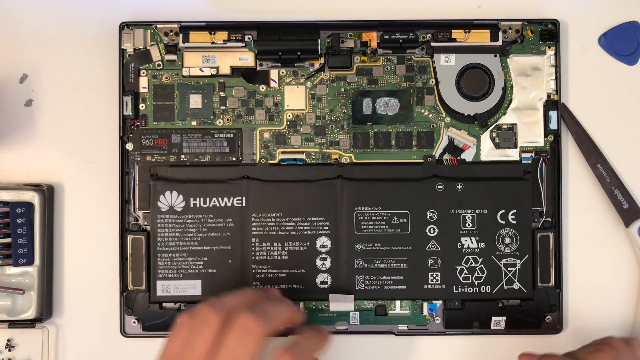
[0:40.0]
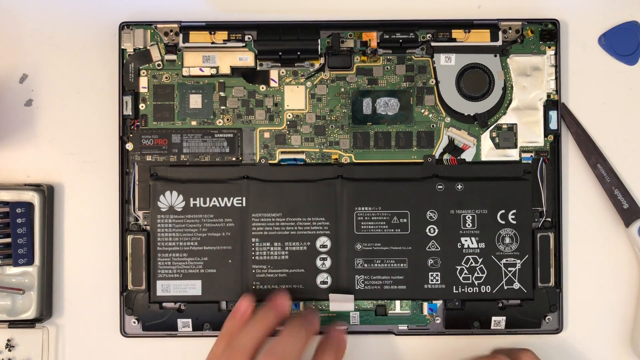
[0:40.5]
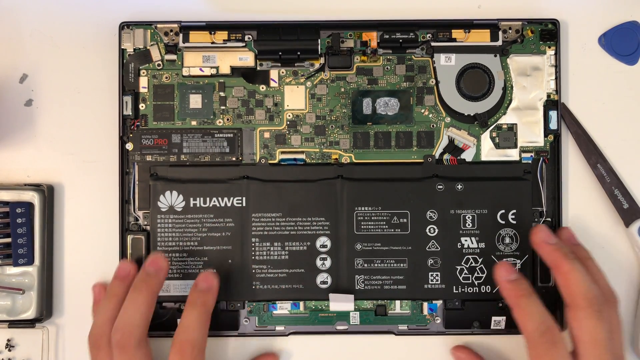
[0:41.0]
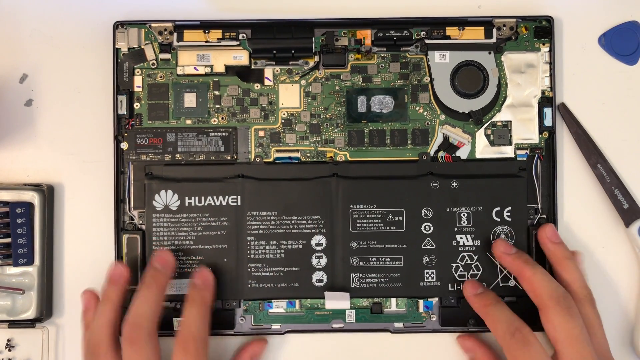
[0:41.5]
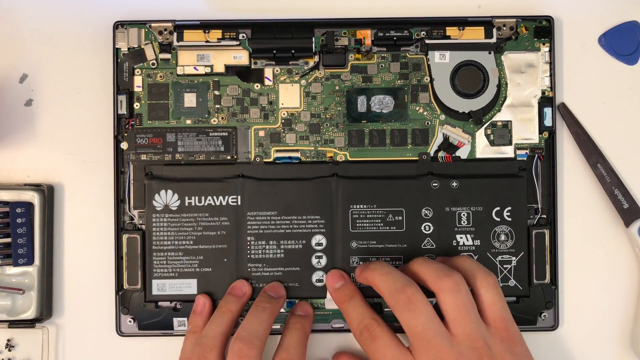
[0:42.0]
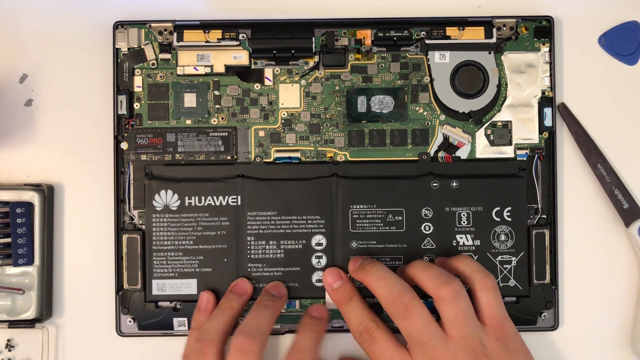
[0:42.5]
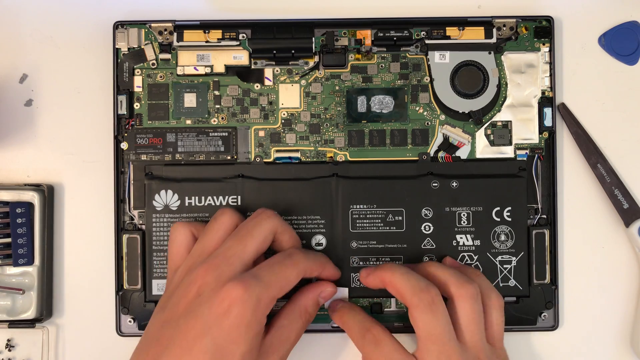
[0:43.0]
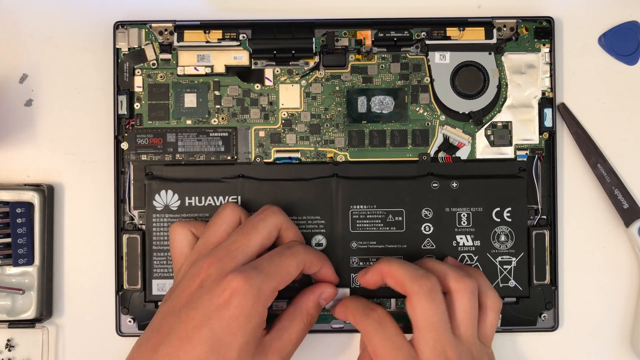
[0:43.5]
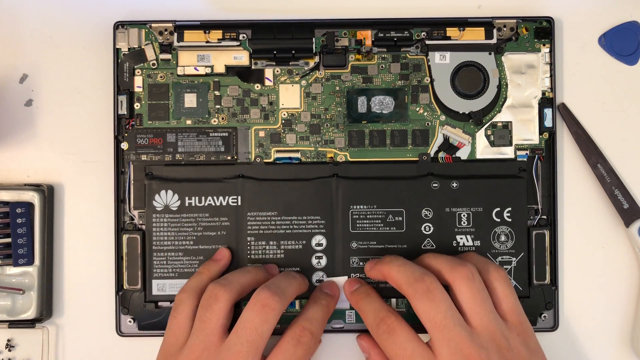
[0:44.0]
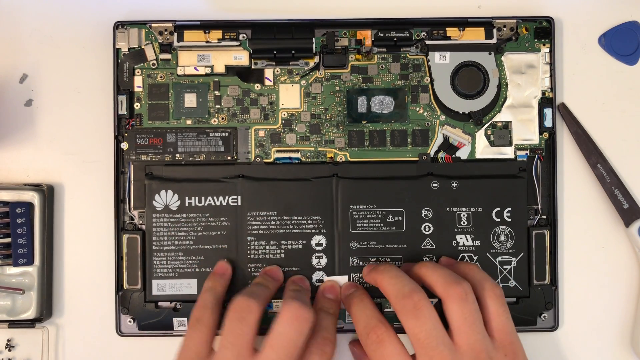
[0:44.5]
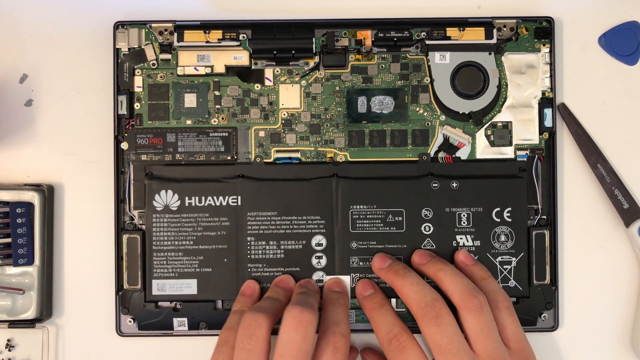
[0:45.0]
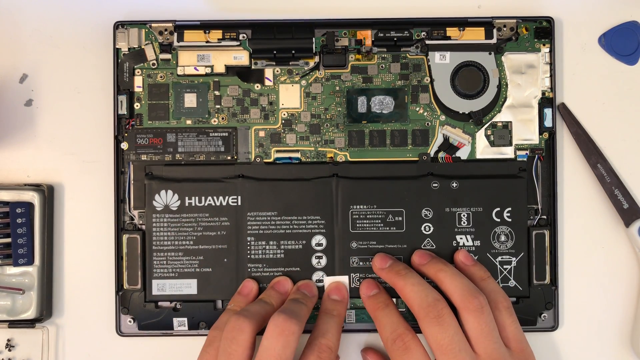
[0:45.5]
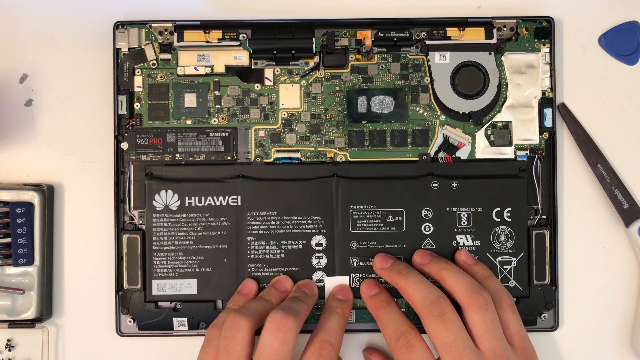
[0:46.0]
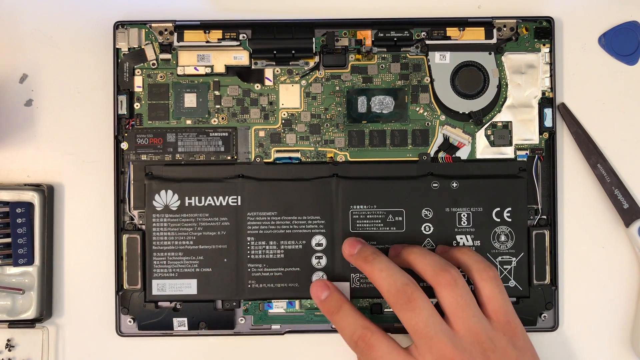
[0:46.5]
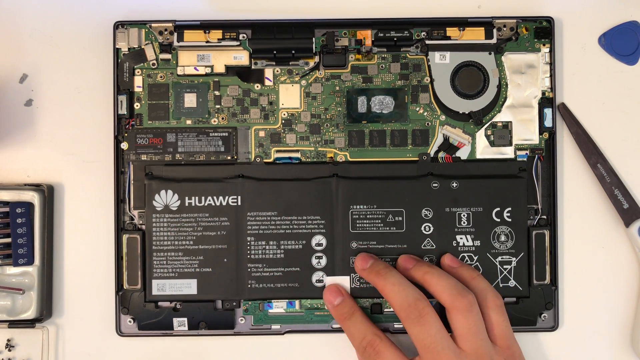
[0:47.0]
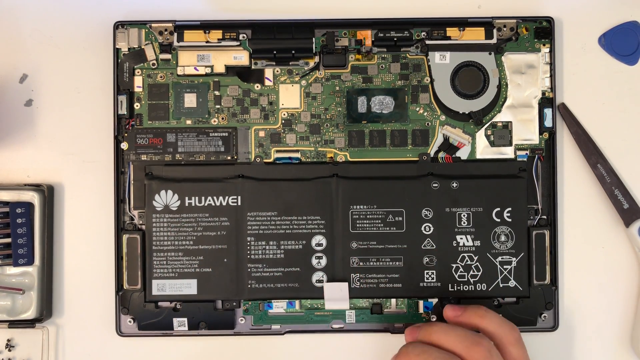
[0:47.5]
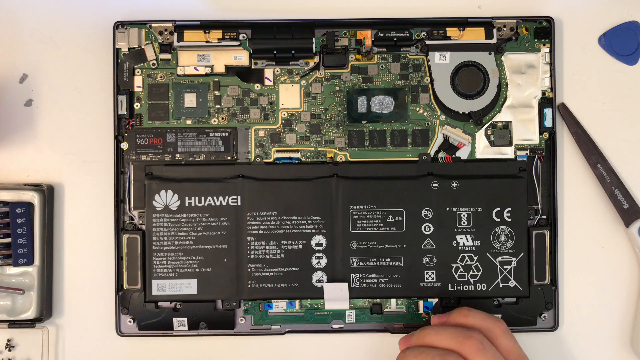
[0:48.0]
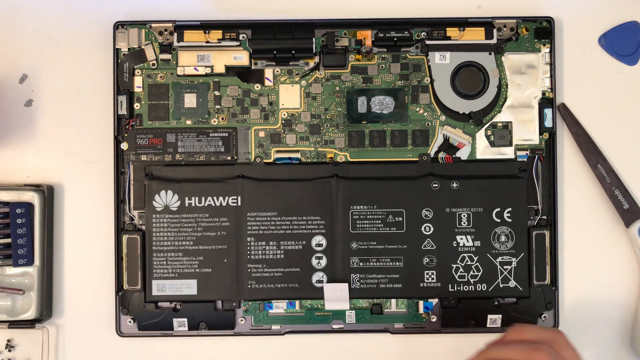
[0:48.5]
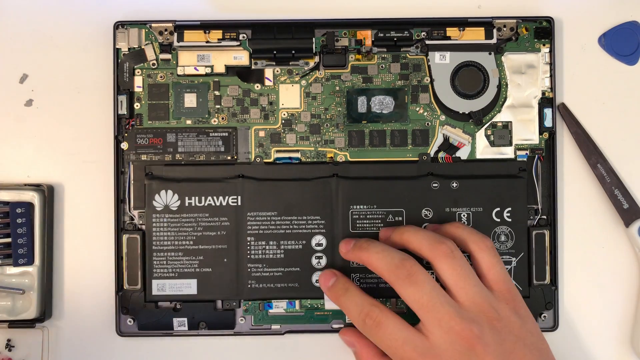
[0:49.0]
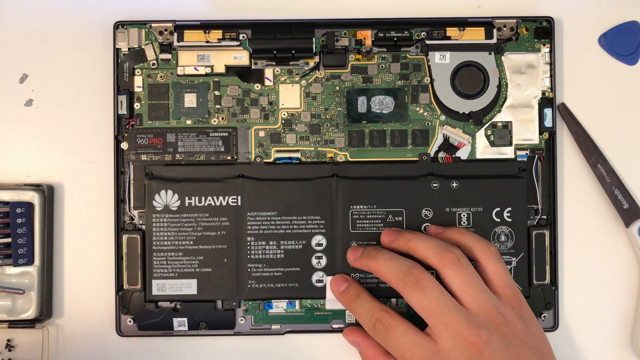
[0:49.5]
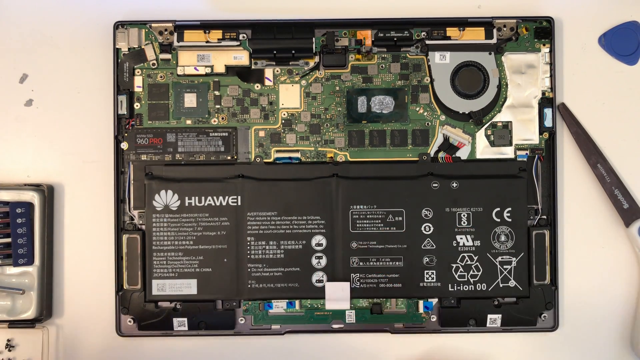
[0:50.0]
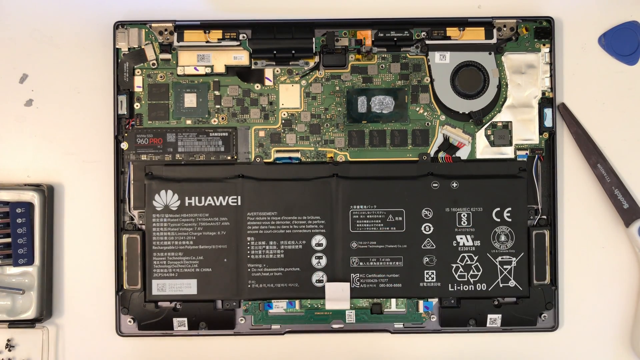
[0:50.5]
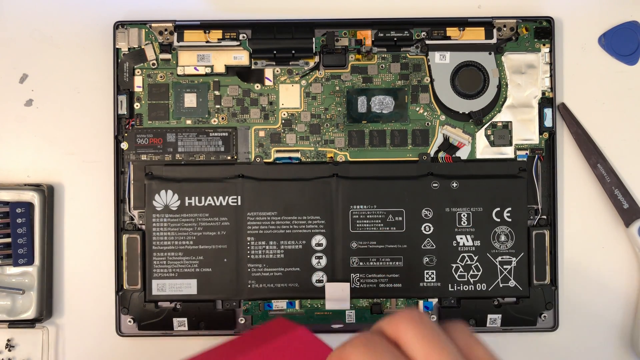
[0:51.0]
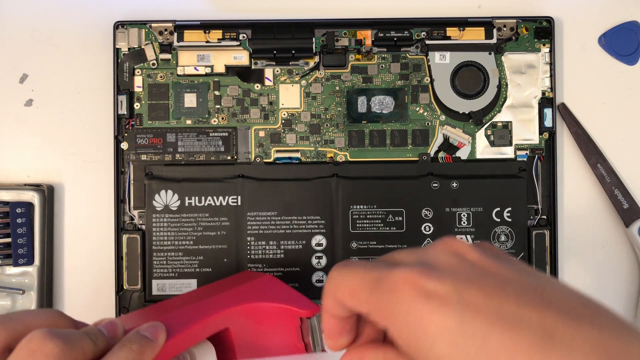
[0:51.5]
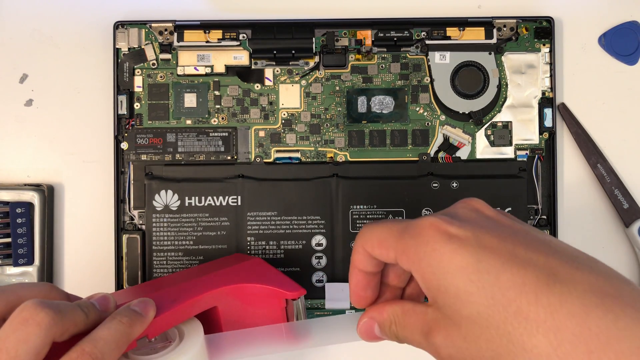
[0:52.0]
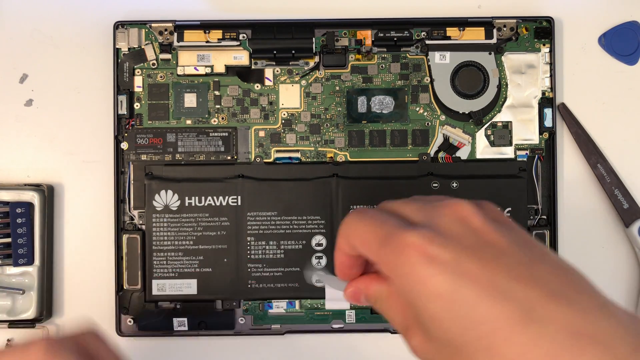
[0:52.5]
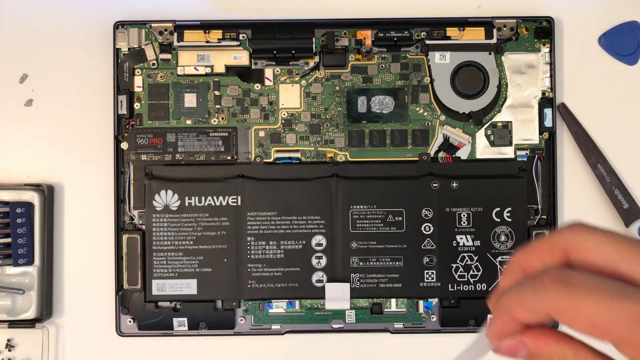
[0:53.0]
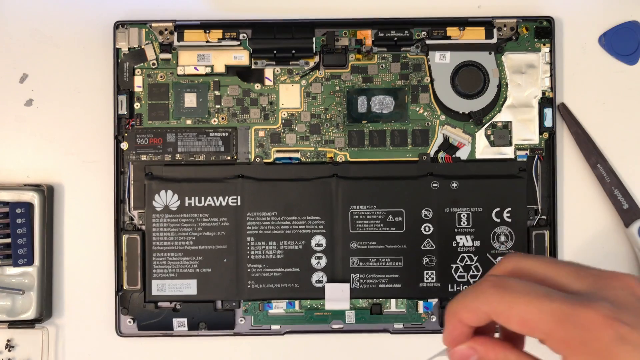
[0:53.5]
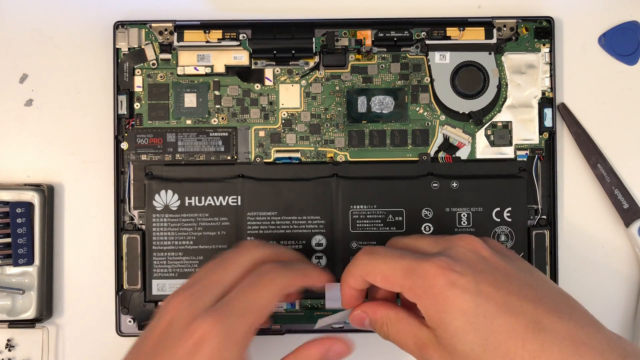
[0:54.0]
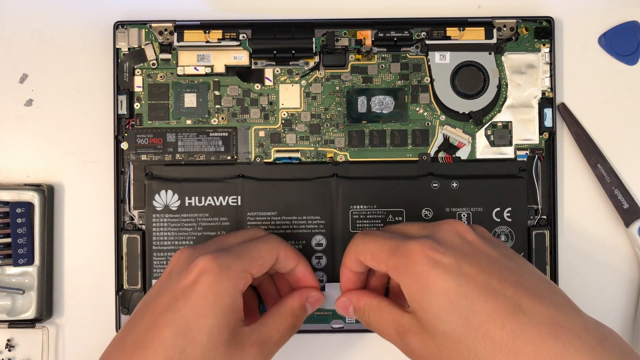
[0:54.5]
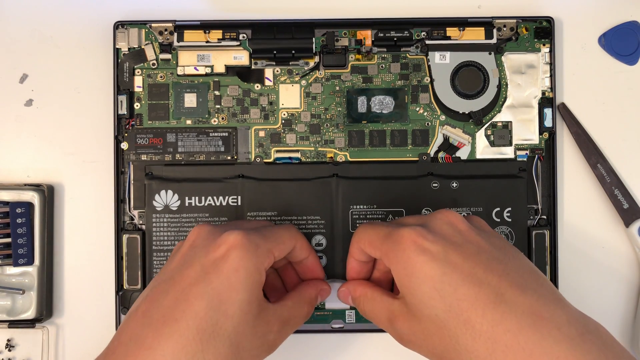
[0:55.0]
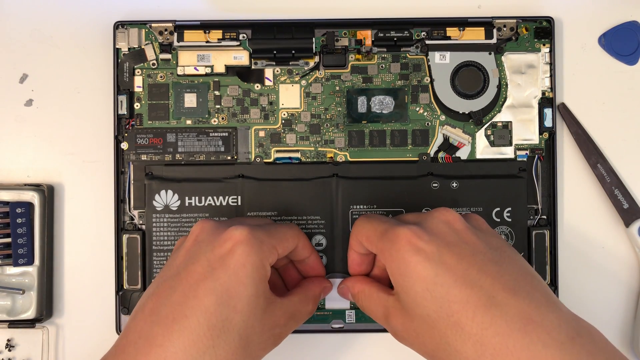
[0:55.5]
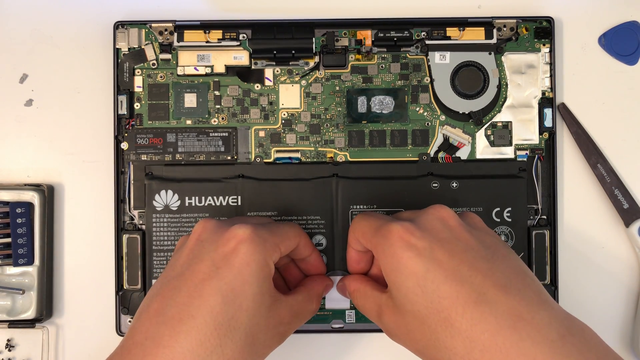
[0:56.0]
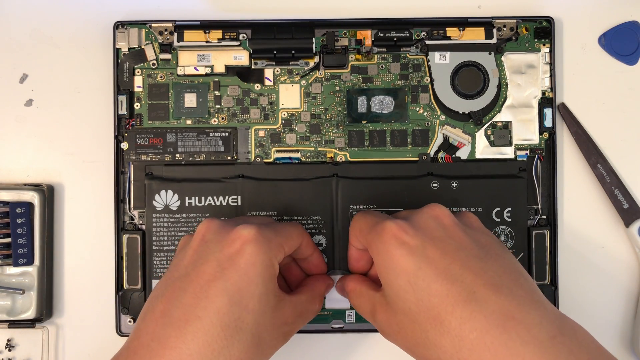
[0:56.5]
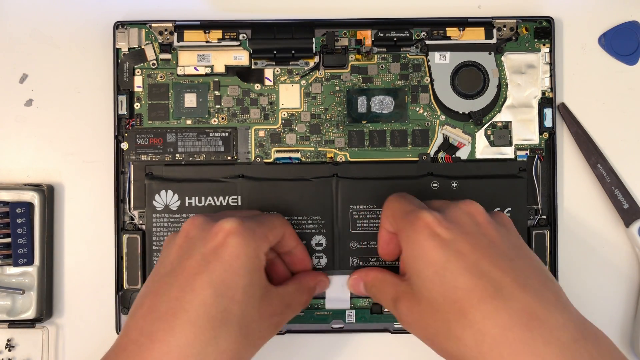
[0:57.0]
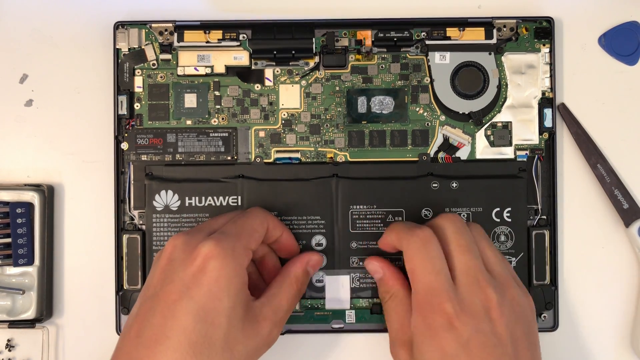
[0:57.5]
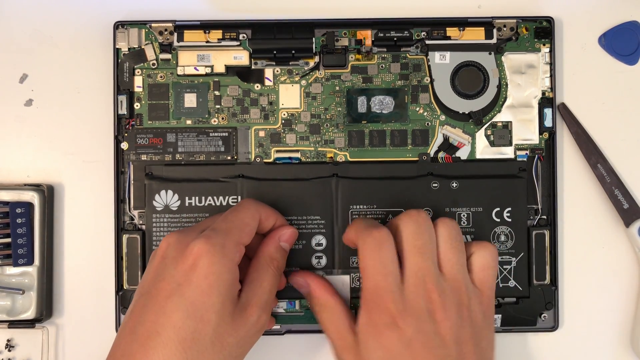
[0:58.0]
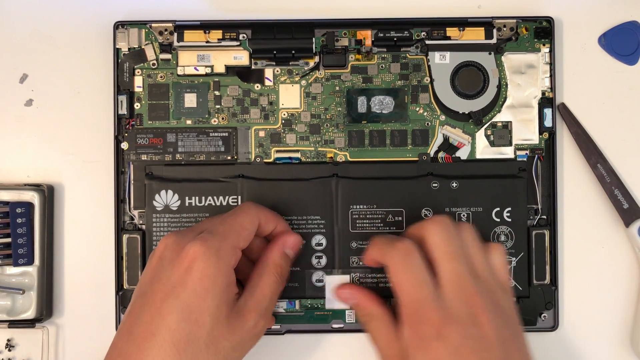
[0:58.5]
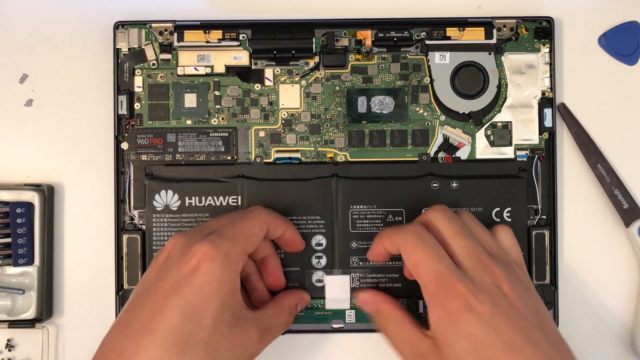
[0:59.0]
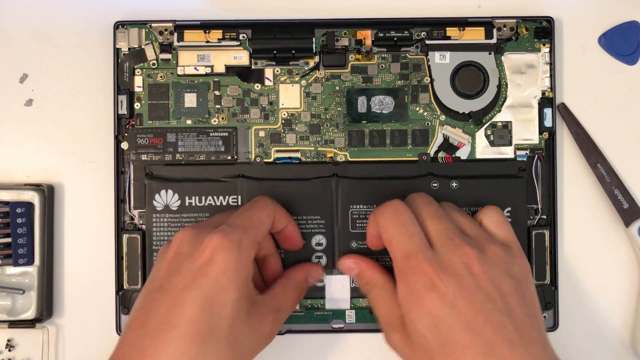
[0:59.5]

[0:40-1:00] A person records themselves handling a laptop that is missing its outer case or shell. The exposed electrical components and battery face up toward the camera in a bird's eye view. On the left side of the frame is a gadget made of gray, blue and white plastic. On the right side is a pair of dark stainless steel scissors, and in the top right corner is a blue triangle with a circle imprint. The person touches both sides of the computer's edge at the bottom of the frame, then moves to the middle and grabs a white rectangular piece of paper. They touch it with the right hand, then the left hand, try to pull it up, straighten it out flat and make sure it is snugly in place, then touch it again with the left and then the right. Trying to make it stay, they take a piece of tape from a pink tape dispenser and place about a two-inch piece across the top half of the paper in the middle of the computer. They flatten the tape over the battery, taking care not to get it on any other electrical components, and smooth it out on either side of the paper.